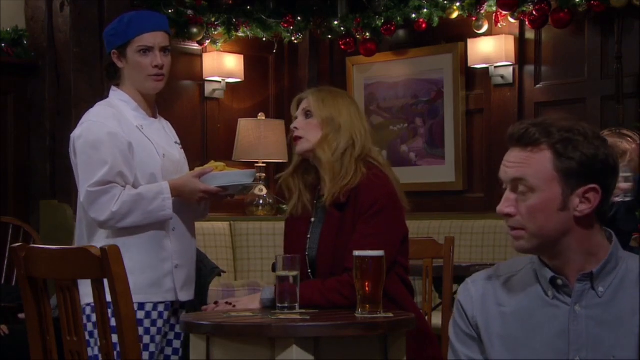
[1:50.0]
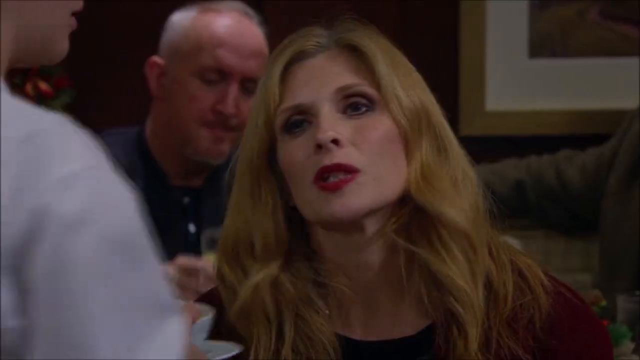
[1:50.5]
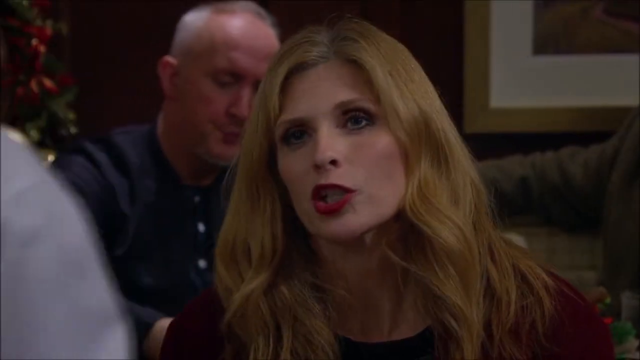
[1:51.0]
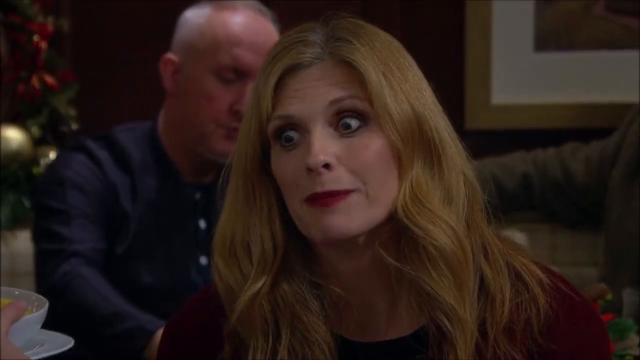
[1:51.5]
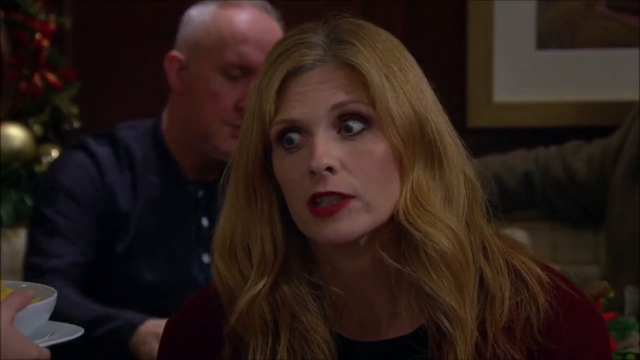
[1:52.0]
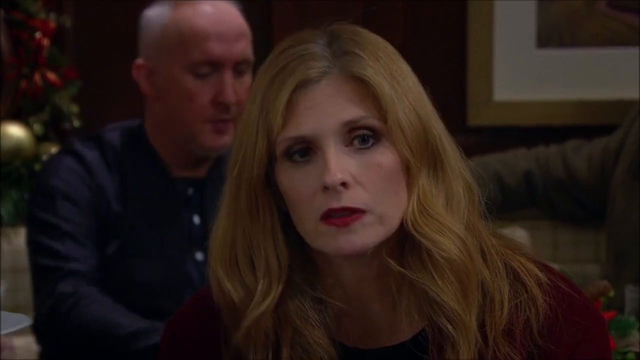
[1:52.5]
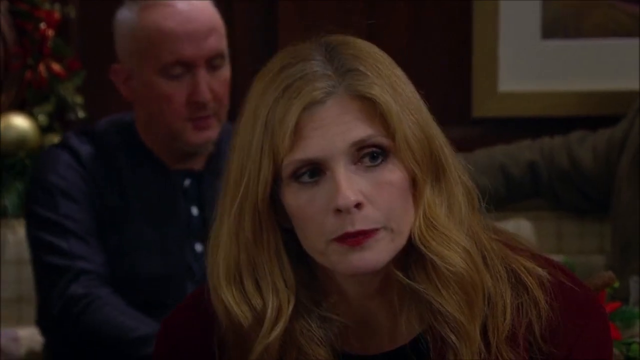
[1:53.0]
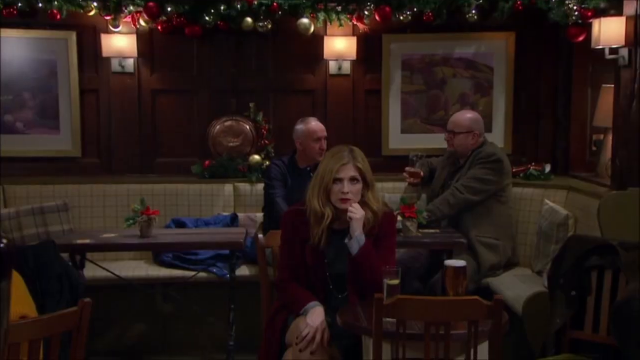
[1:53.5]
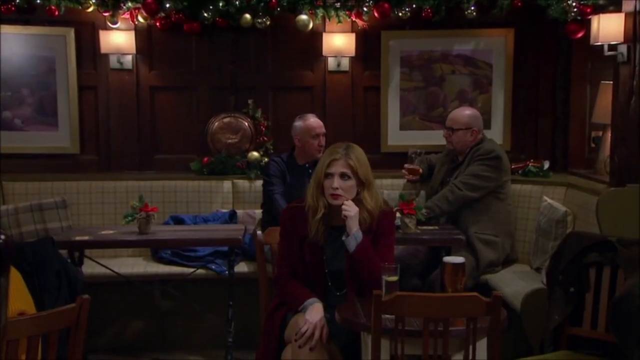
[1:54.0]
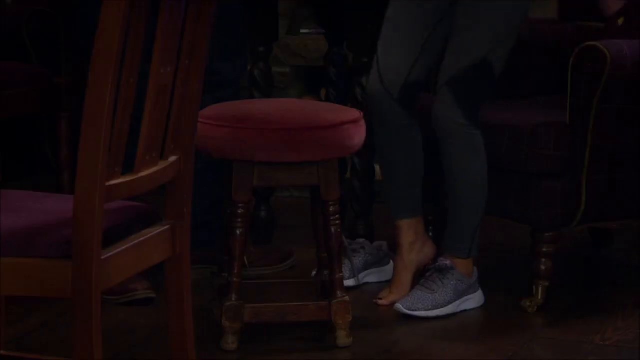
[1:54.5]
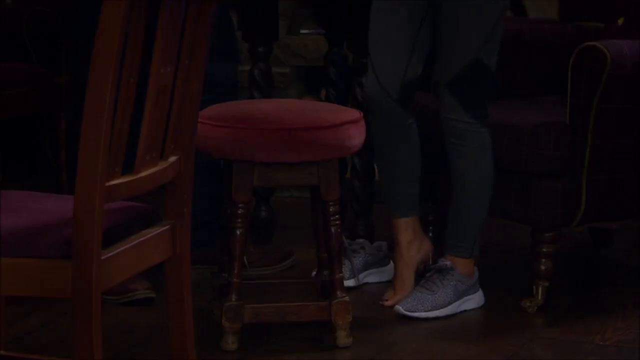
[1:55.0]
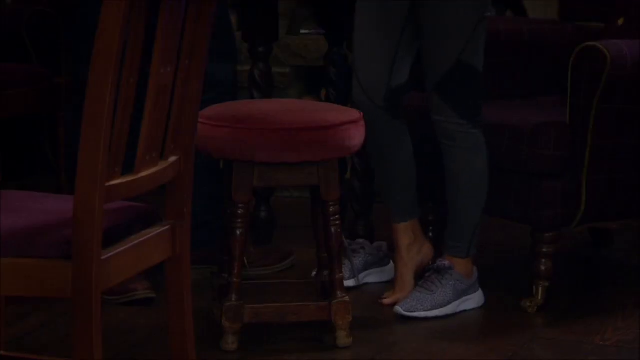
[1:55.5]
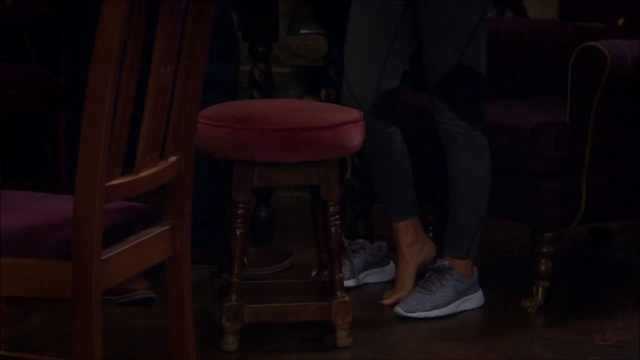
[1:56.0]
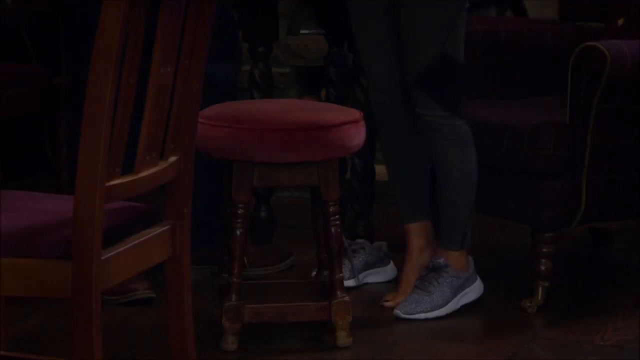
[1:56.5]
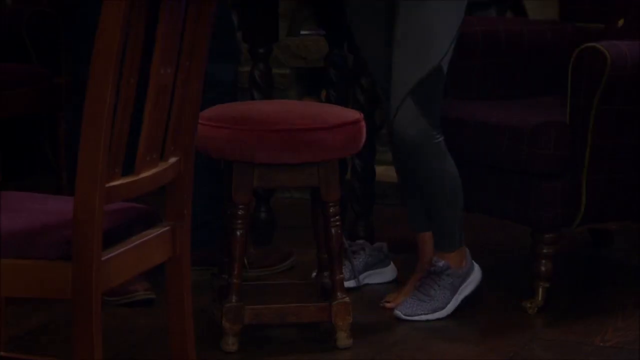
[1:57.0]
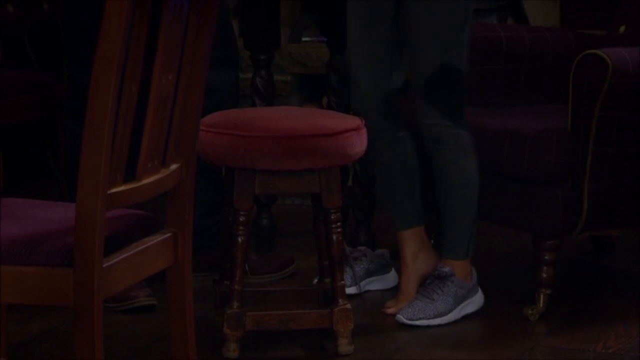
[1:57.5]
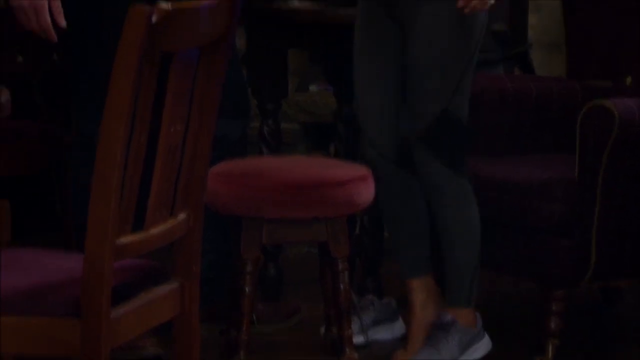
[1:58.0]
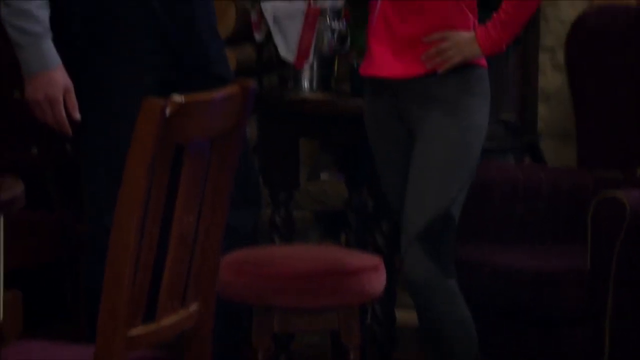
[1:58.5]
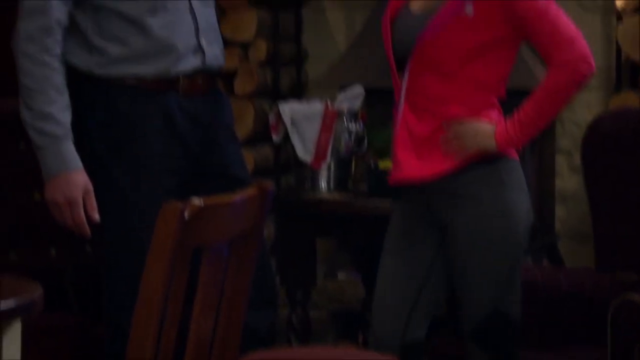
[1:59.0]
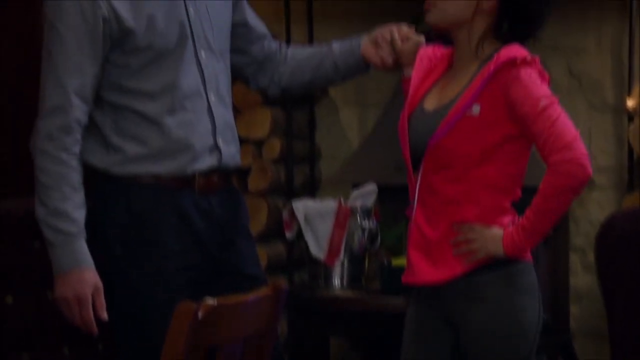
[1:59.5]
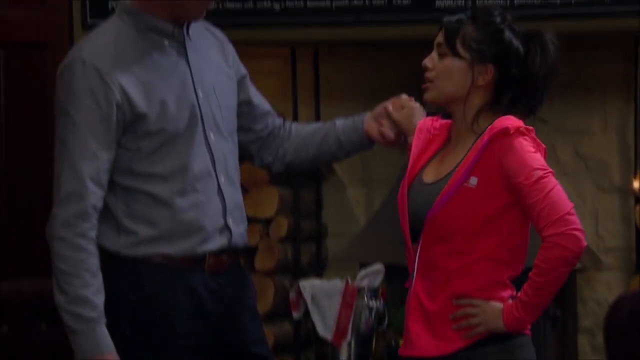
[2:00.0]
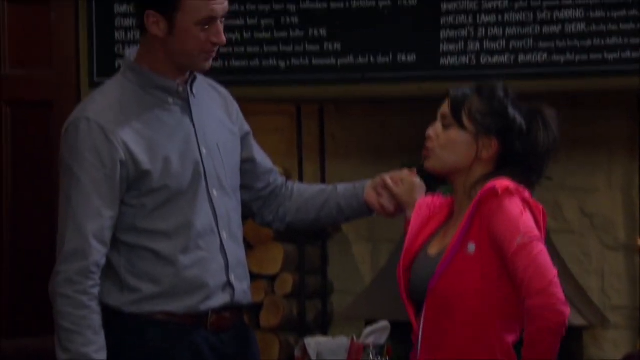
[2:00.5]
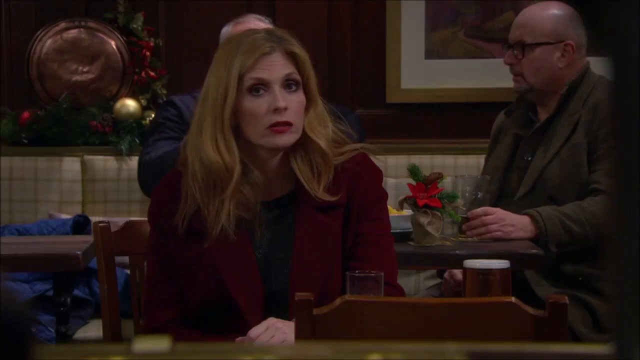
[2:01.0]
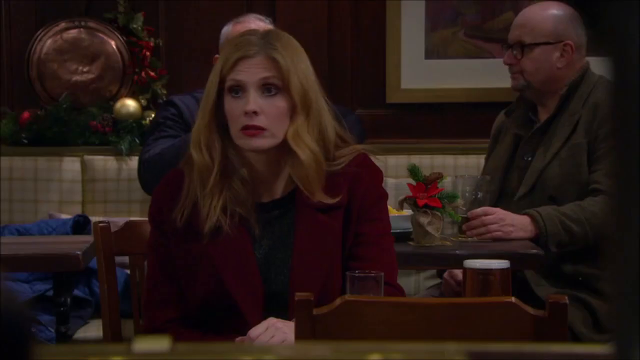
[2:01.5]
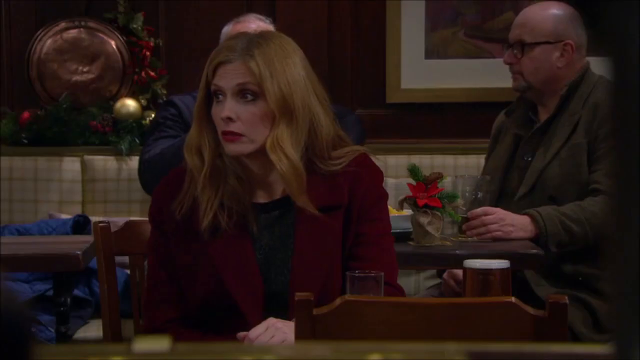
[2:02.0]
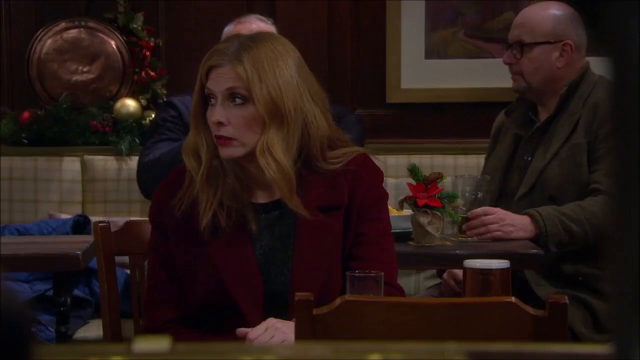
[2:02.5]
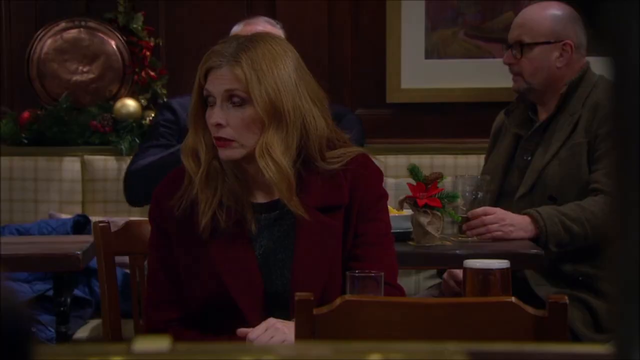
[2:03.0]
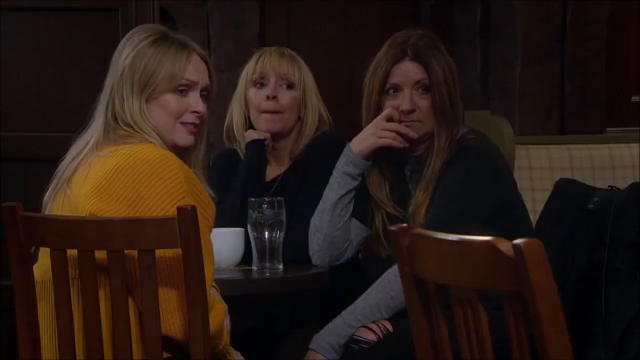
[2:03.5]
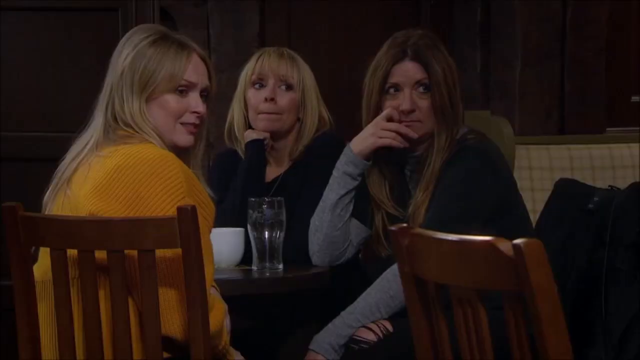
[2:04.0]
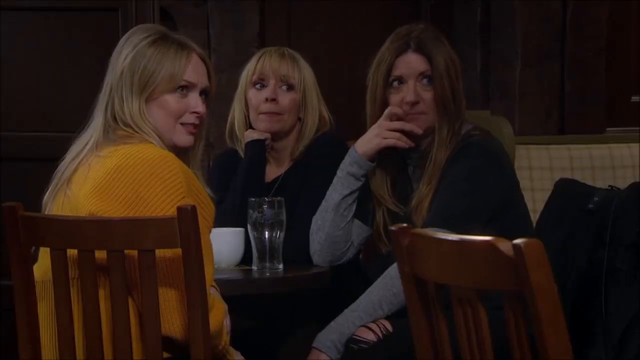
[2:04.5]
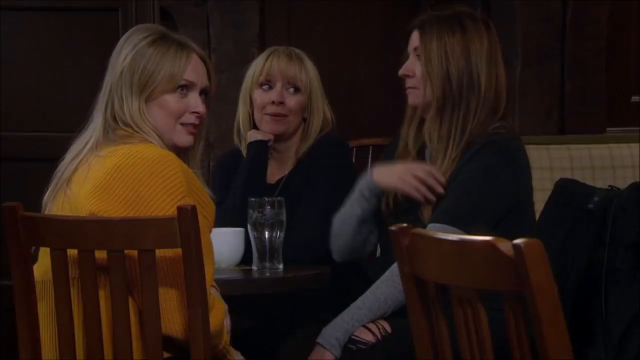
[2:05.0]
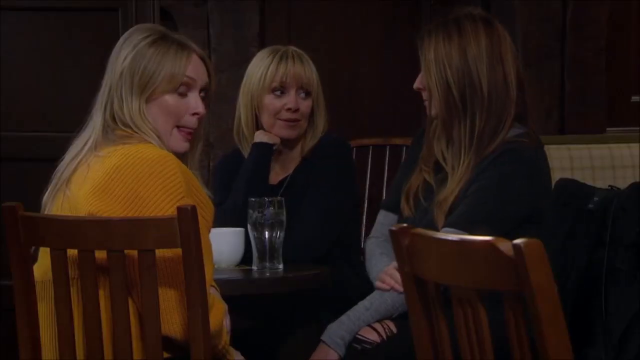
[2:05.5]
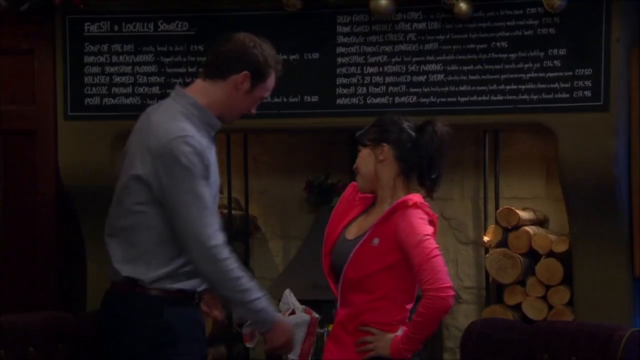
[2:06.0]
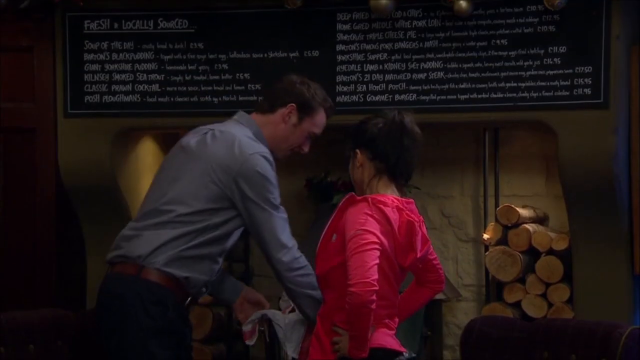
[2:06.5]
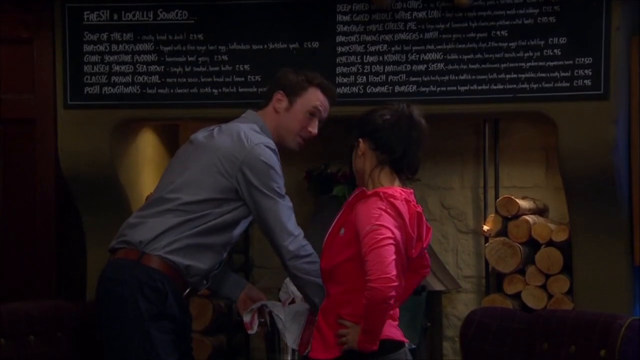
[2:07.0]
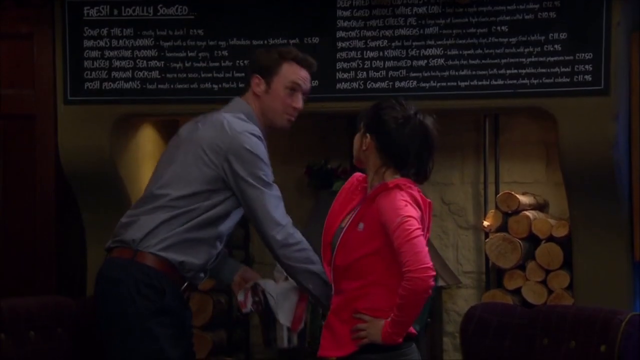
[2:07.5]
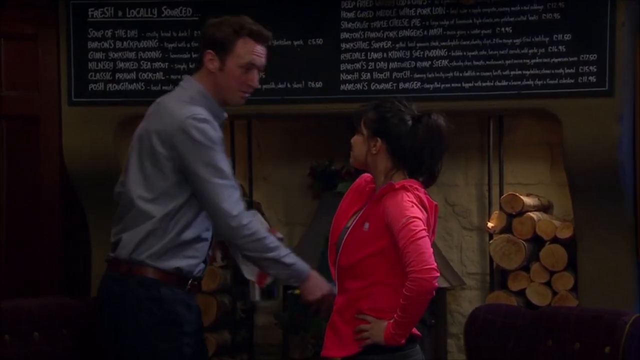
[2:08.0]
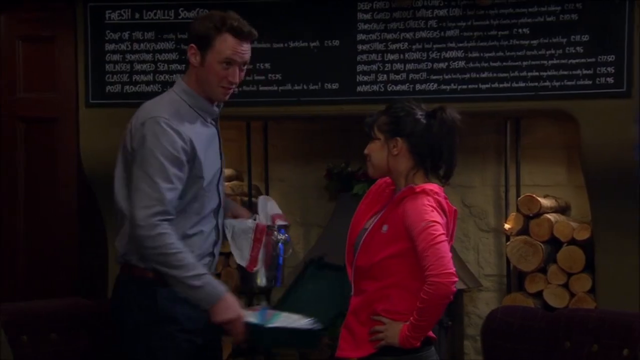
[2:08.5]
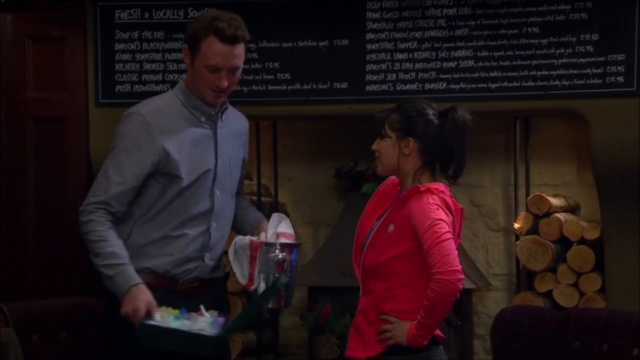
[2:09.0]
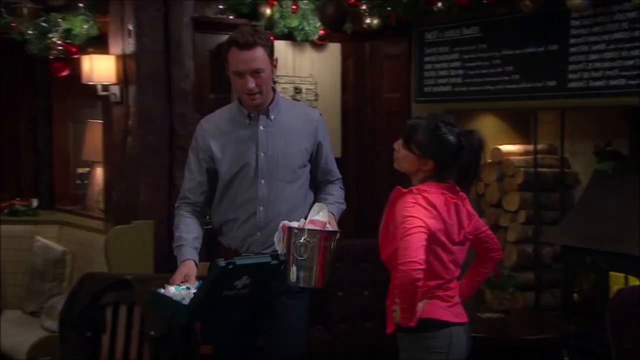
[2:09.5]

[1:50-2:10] The blonde lady in the red jacket and black top is not happy and says something biting to the chef. The shot switches back to her looking unhappy. The injured woman gets up and tests her foot or ankle, trying to act sexy and cute, holding his hand, and the man holds her hand. Three ladies who were at the bar earlier are still there, watching: one with long blonde hair and a yellow shirt, another with brown hair and a black and gray shirt who has her hand in her lap as if she can't believe it, and an older lady with short blonde hair in a black shirt. They kind of smirk and roll their eyes. Finally the man stands up and takes the first aid supplies away. Everyone in the bar seems unable to believe what is going on.